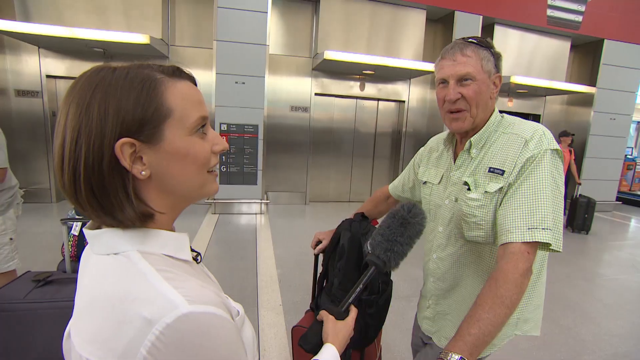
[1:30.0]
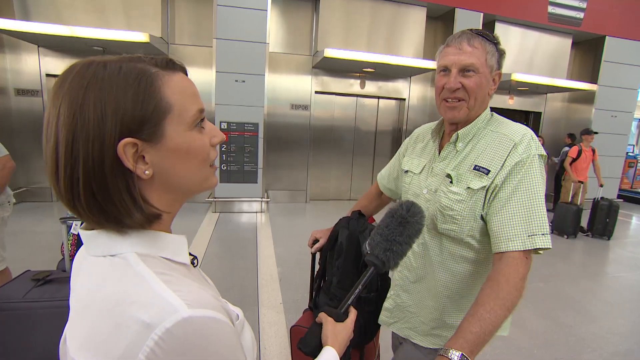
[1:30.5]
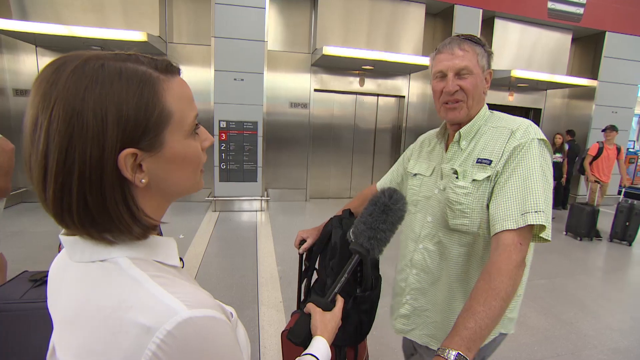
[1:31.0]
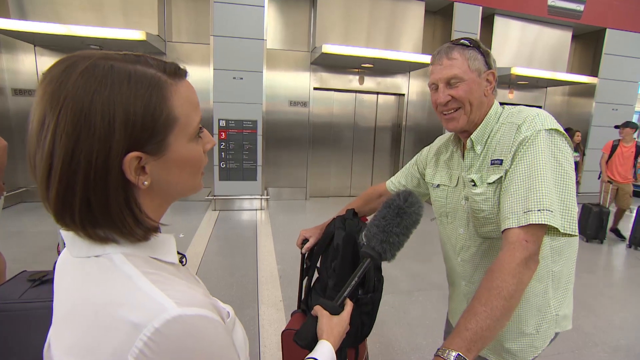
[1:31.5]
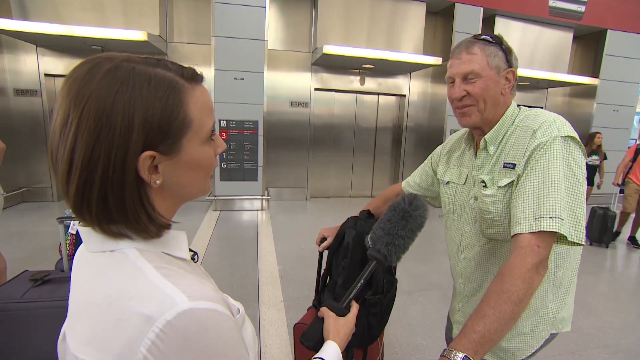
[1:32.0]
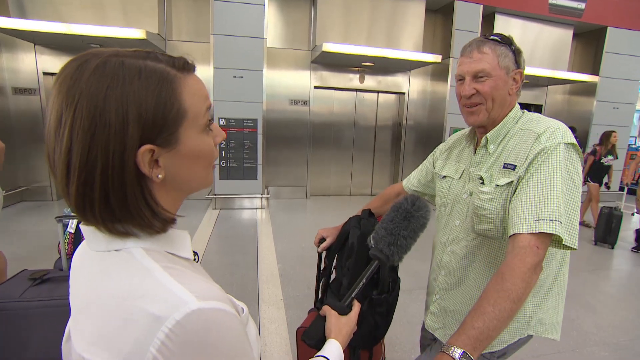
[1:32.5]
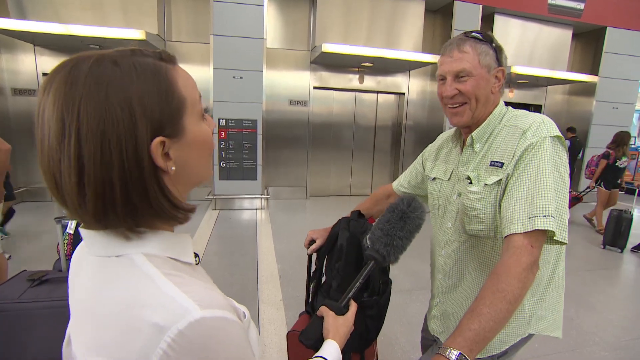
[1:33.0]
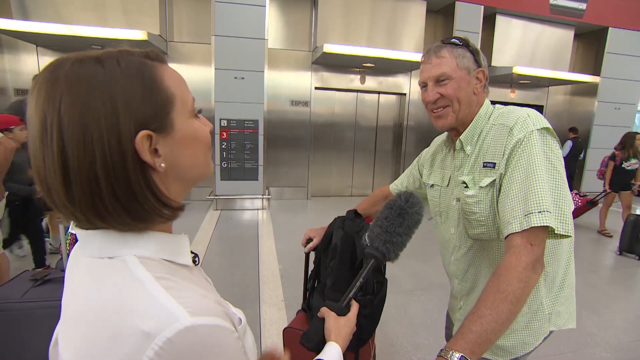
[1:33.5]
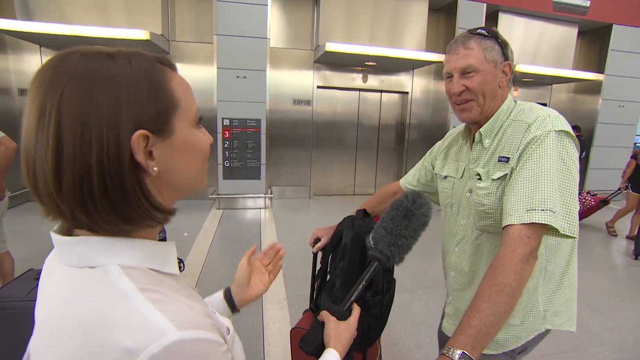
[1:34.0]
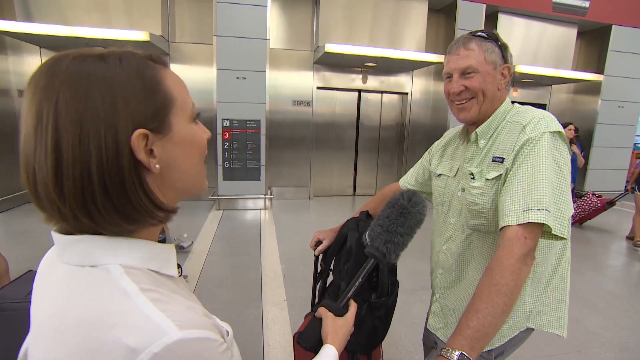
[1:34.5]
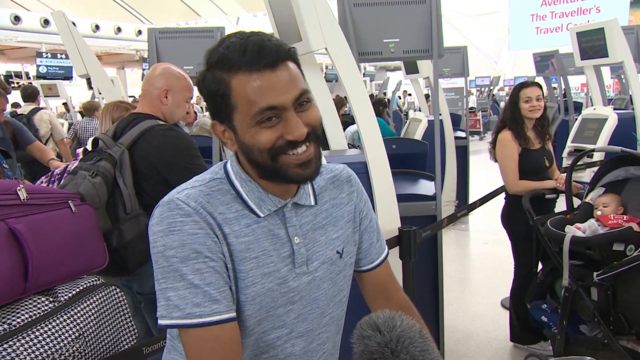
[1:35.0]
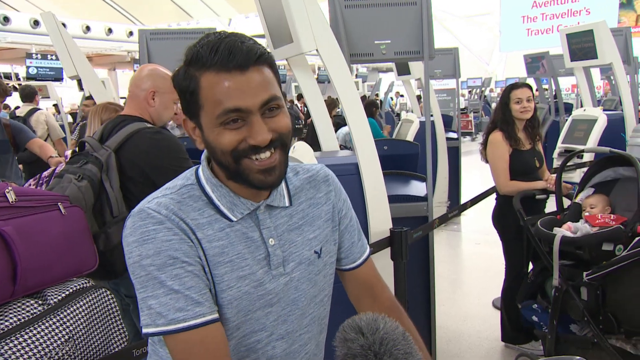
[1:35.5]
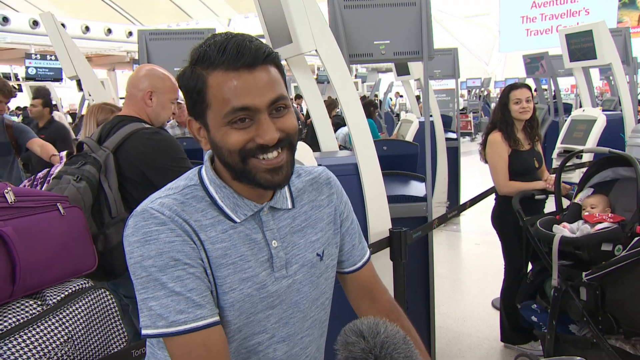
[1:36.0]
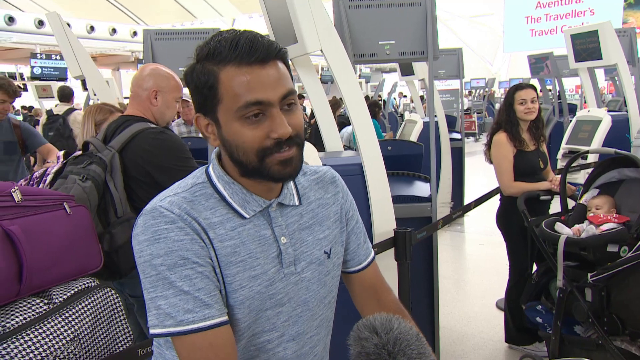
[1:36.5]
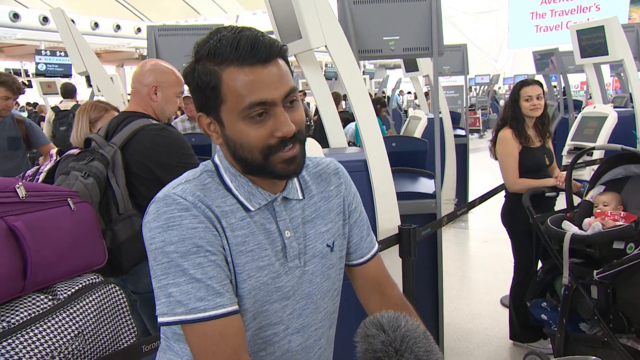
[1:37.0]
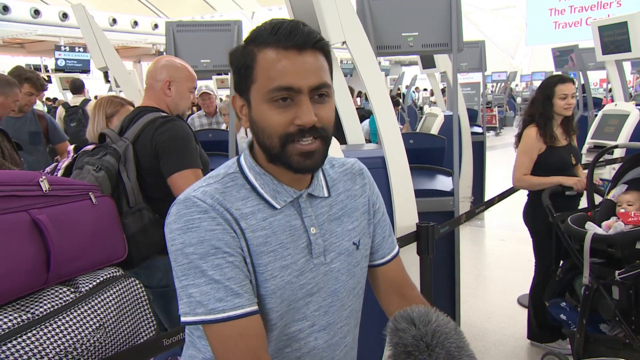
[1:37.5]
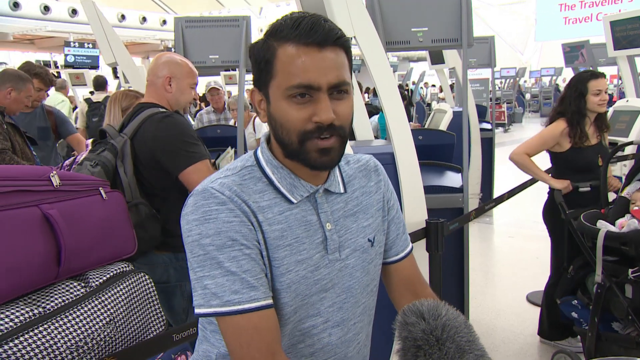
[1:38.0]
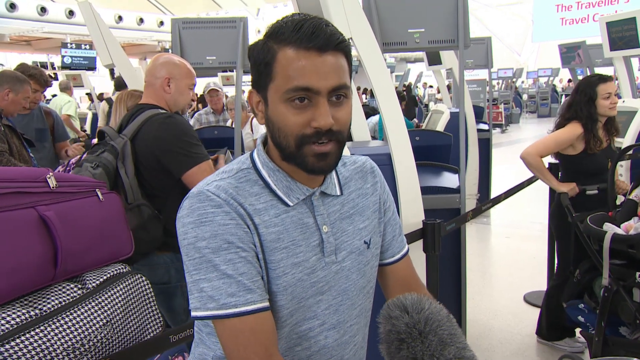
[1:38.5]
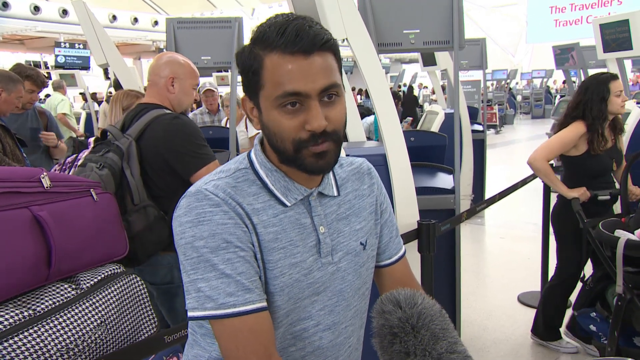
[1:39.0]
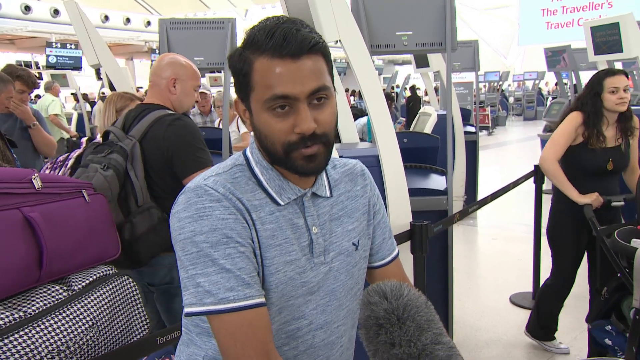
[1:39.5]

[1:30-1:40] A young woman looks to the right toward a man, holding a large fuzzy microphone toward him. The man leans on a cart with a backpack on the handle and luggage on the flat end. He wears a short-sleeved green and white button-up shirt and has sunglasses pulled up onto the top of his head. Behind them is a bank of stainless steel elevators, with people coming in and out. The man talks, leans forward and laughs. The video then cuts to a different interview with a man in the same airport, in line for various kiosks. He wears a blue polo shirt with its two buttons buttoned up and also has a luggage cart. He shrugs, smiles and talks toward the microphone, which comes in from the bottom center of the screen.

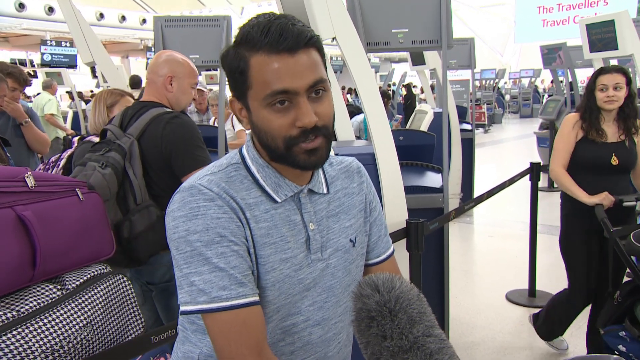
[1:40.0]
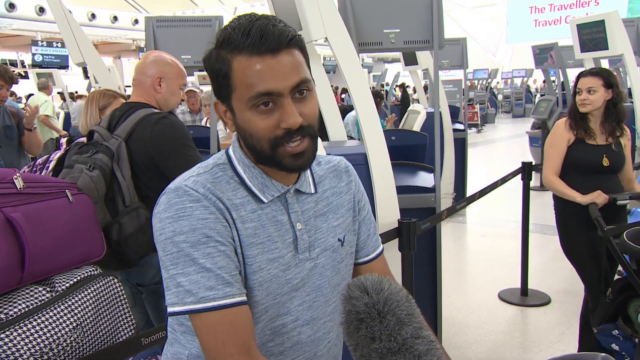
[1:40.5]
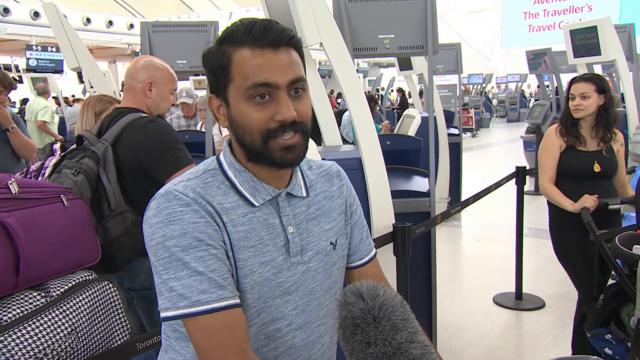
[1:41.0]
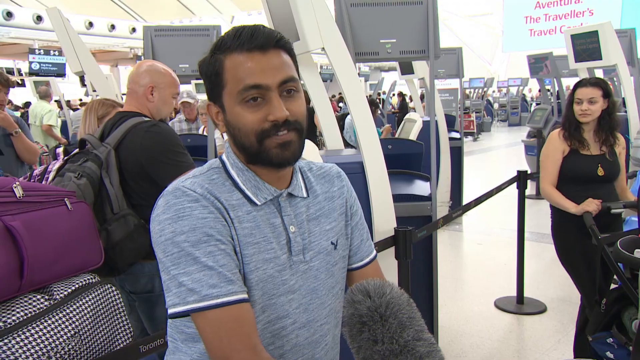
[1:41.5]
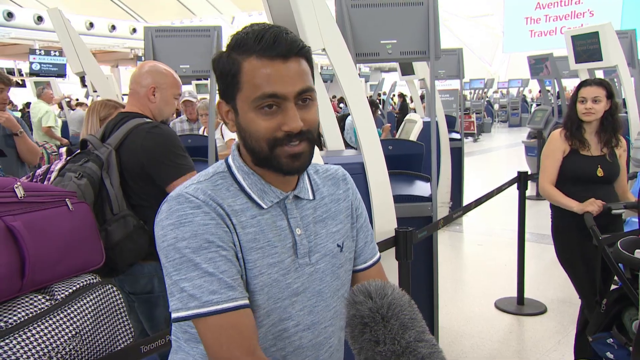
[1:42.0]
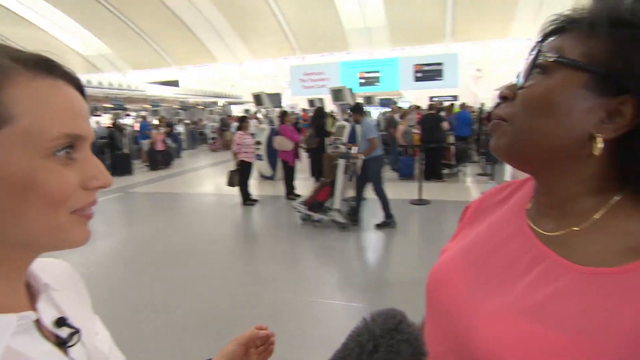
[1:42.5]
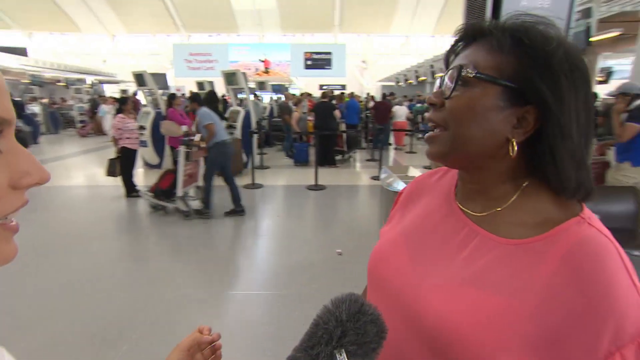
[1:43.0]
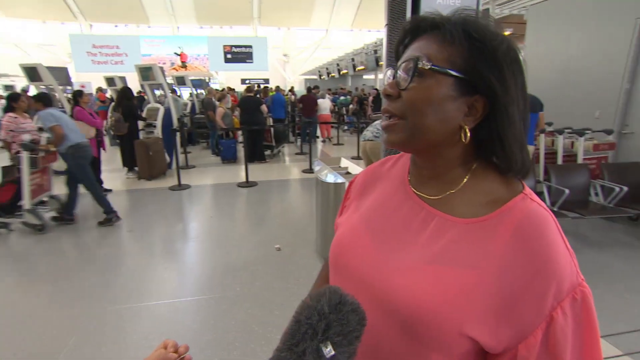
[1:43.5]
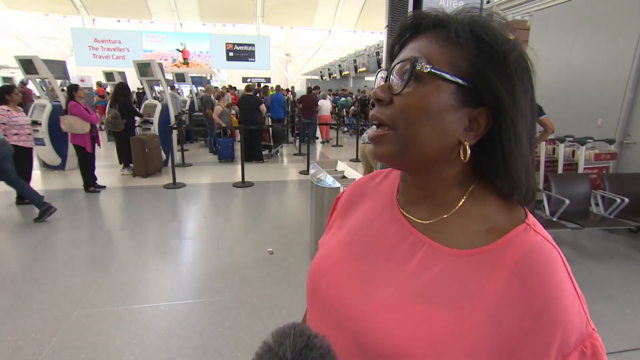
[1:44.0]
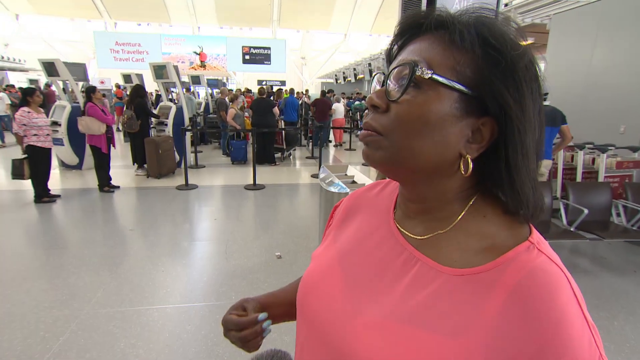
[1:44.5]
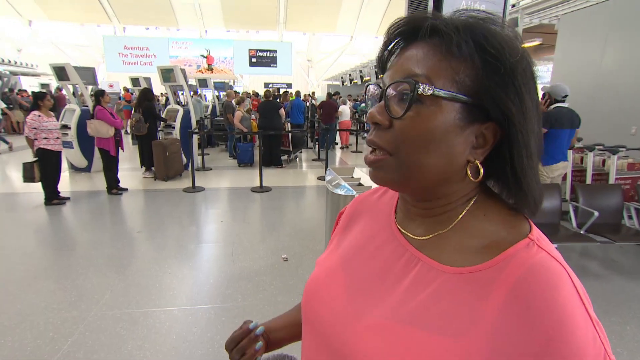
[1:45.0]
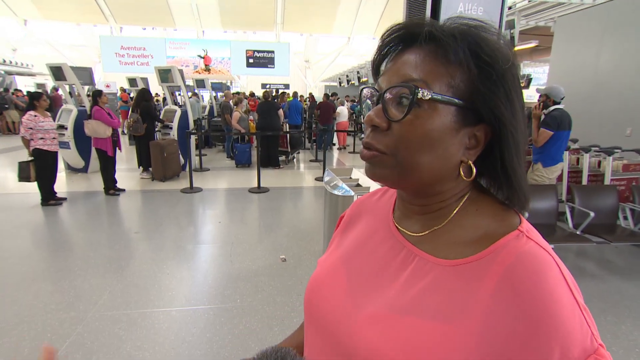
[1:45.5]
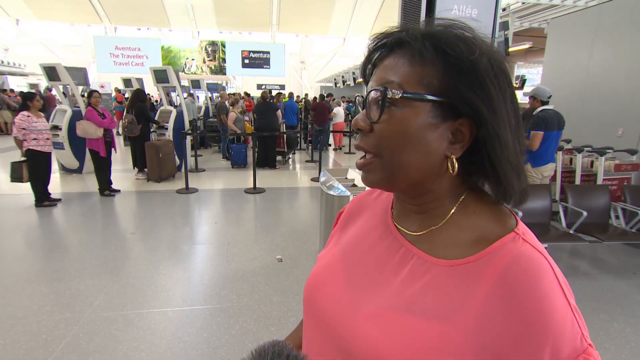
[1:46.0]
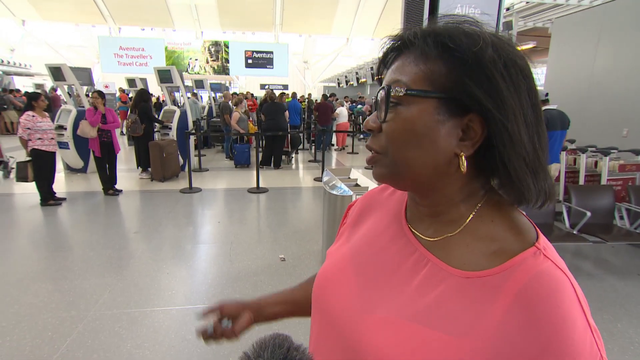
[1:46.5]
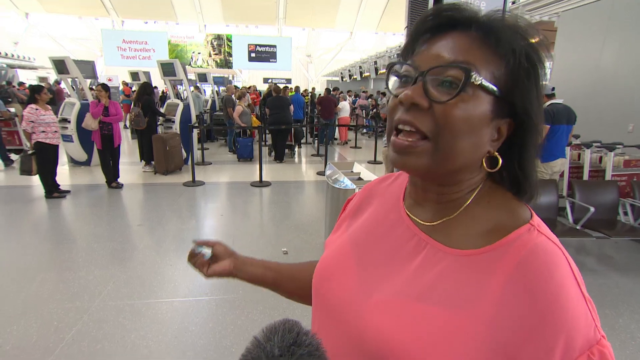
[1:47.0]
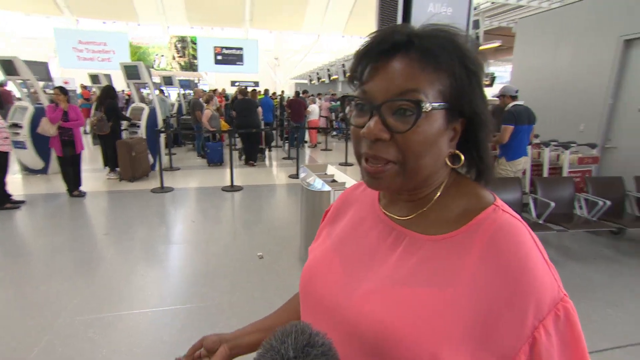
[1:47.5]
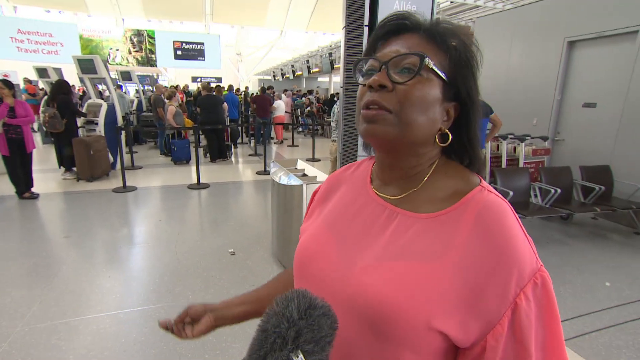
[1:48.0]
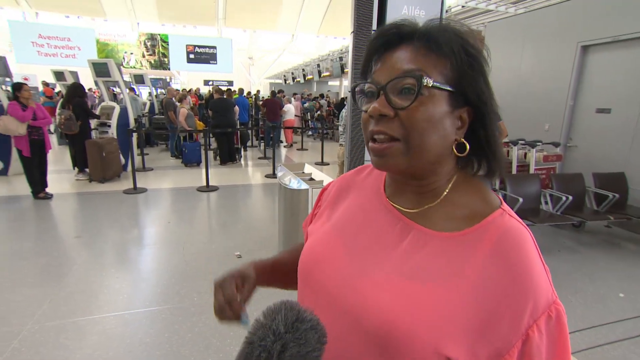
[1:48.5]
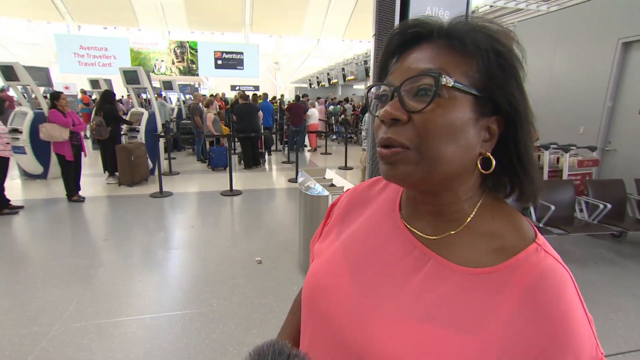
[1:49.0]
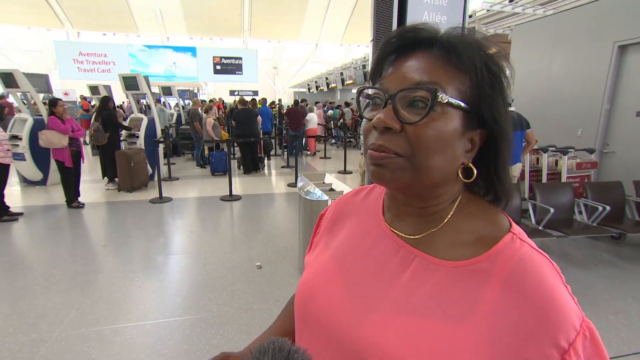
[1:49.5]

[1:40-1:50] A man gives an interview toward the camera, with a microphone covered by a fuzzy muffler coming in from the bottom center of the screen and pointed at his mouth. In the background, multiple lines lead up to various screens and kiosks inside the airport. The man talks, shakes his head and laughs. The video then cuts to an interview with a woman who looks up toward the ceiling as she talks toward the microphone. She has no luggage, and with her right hand she motions expressively toward the lines in the airport behind her. Multiple lines wind through rope barriers, curling around, with many people carrying luggage and pushing carts.